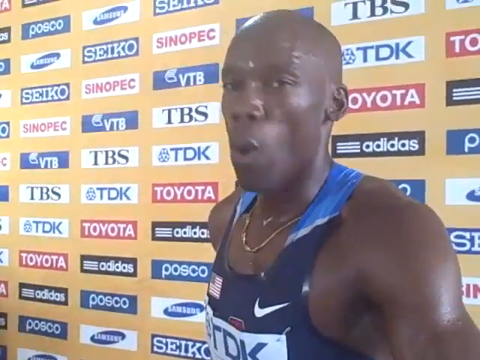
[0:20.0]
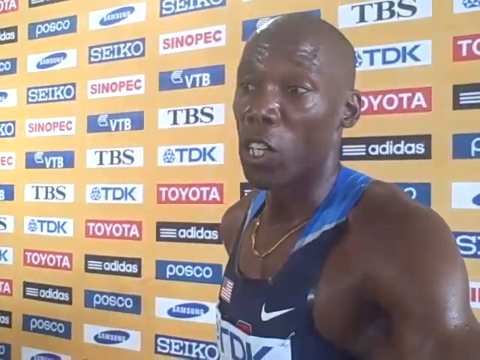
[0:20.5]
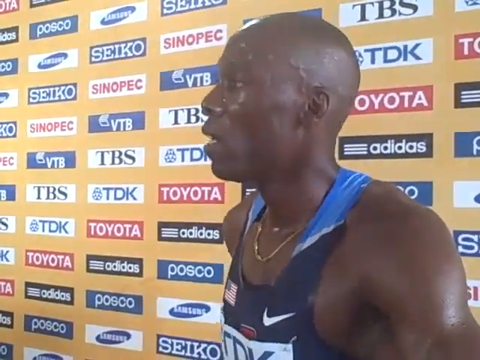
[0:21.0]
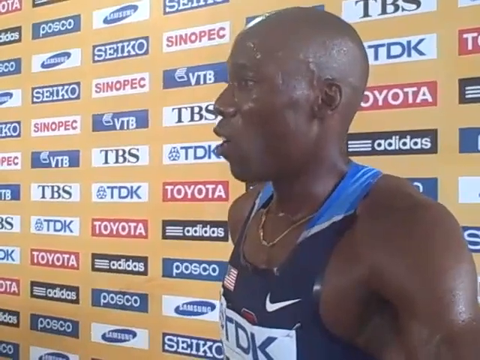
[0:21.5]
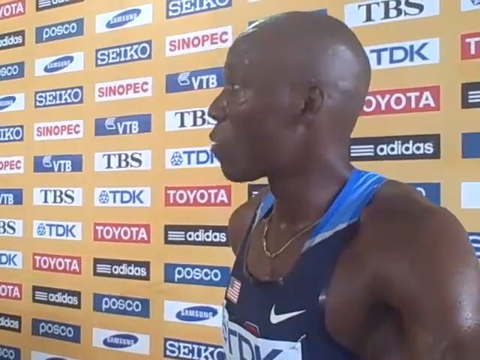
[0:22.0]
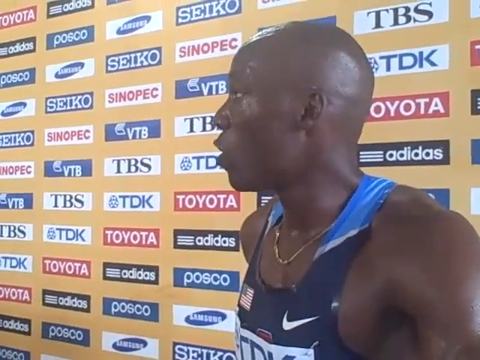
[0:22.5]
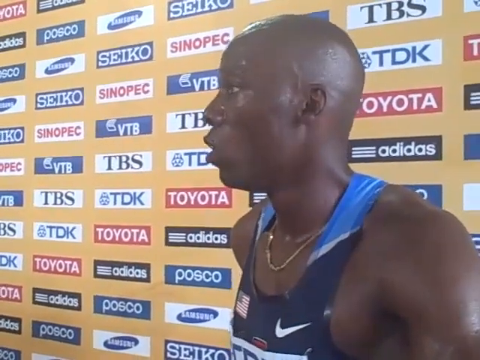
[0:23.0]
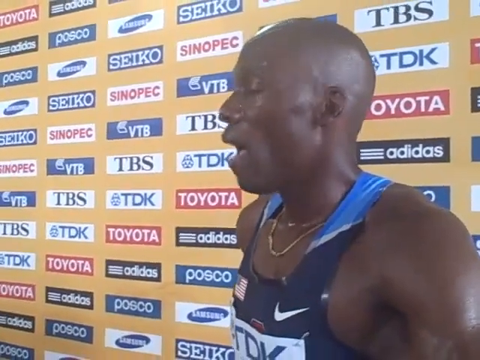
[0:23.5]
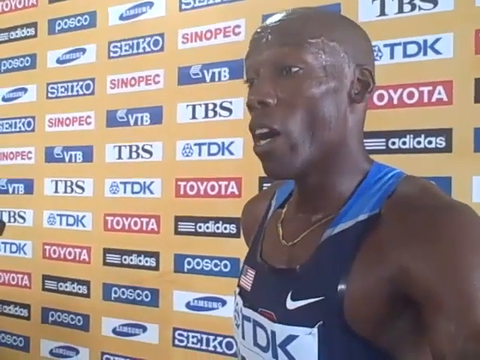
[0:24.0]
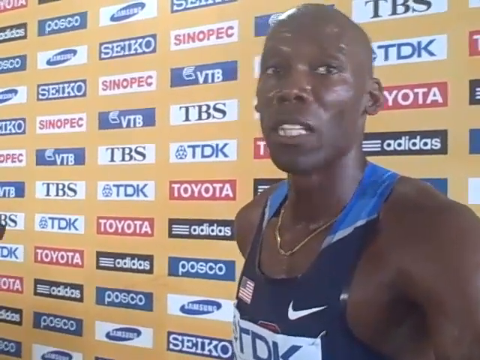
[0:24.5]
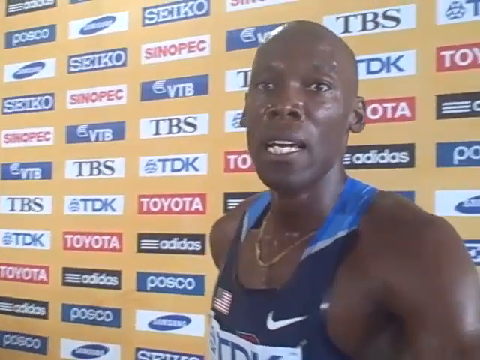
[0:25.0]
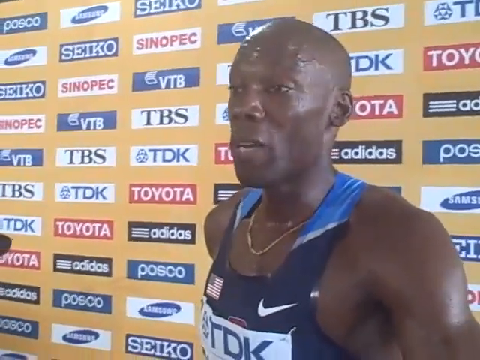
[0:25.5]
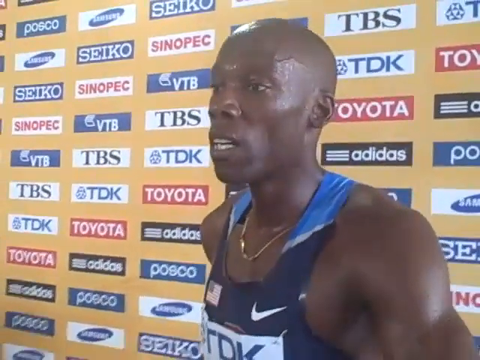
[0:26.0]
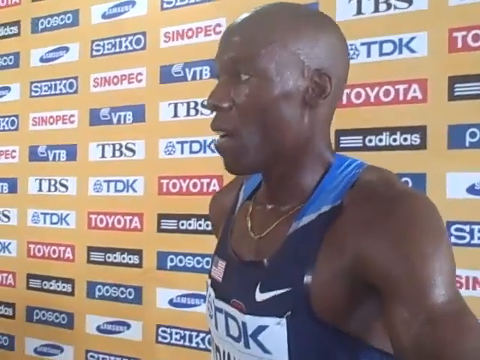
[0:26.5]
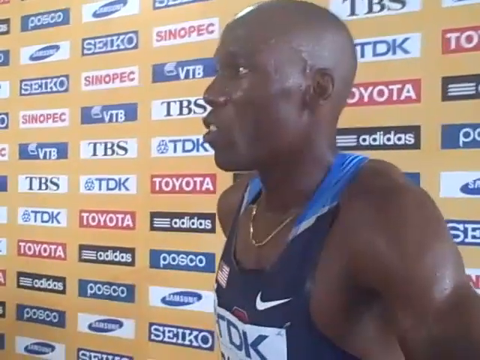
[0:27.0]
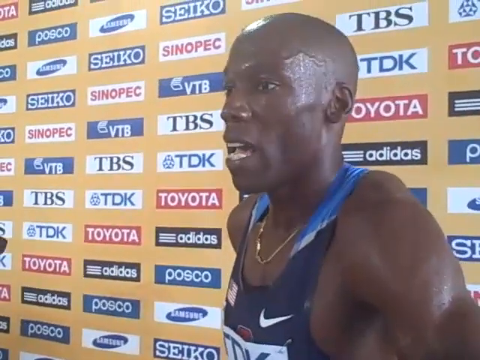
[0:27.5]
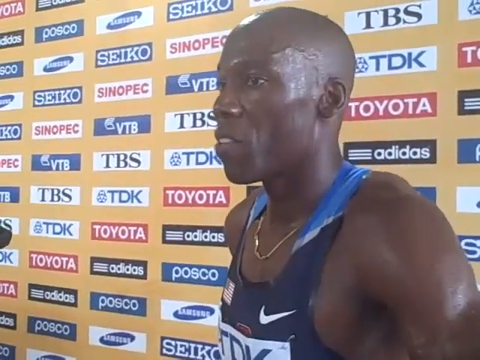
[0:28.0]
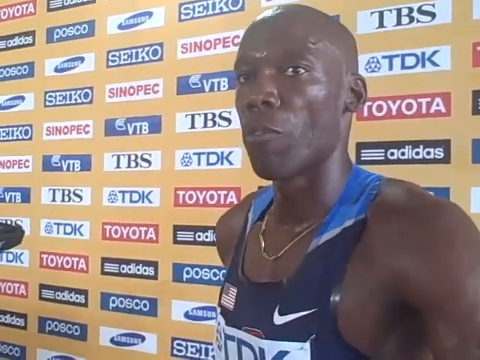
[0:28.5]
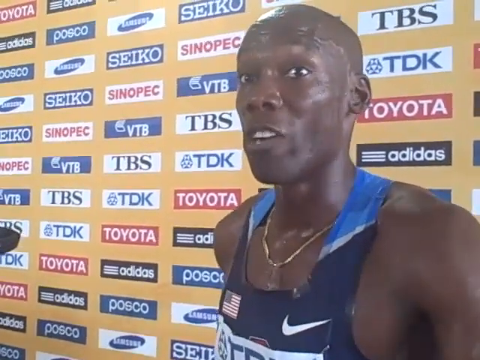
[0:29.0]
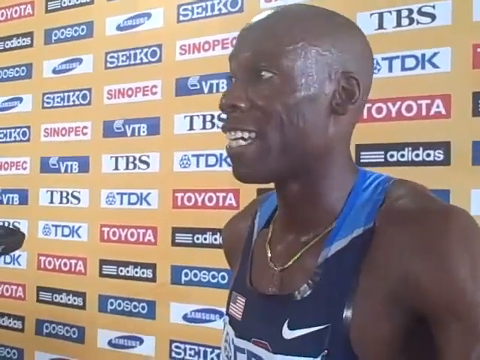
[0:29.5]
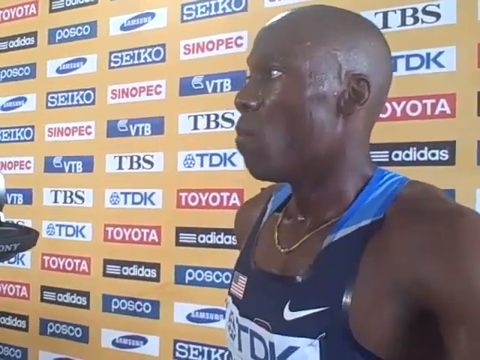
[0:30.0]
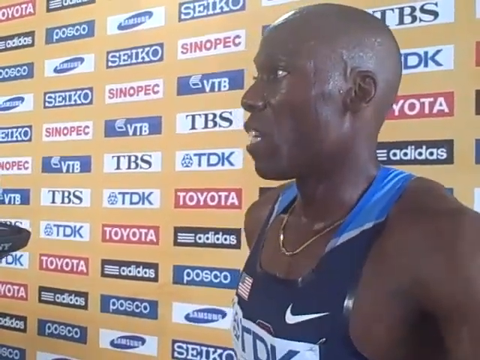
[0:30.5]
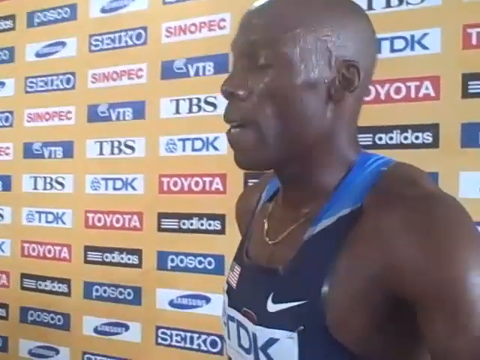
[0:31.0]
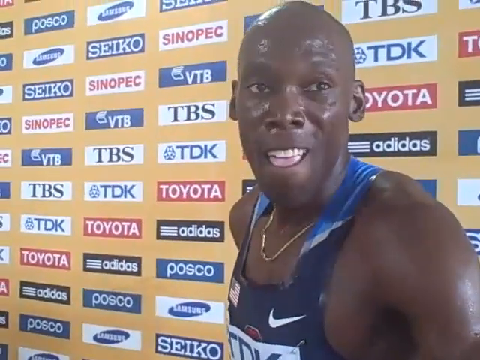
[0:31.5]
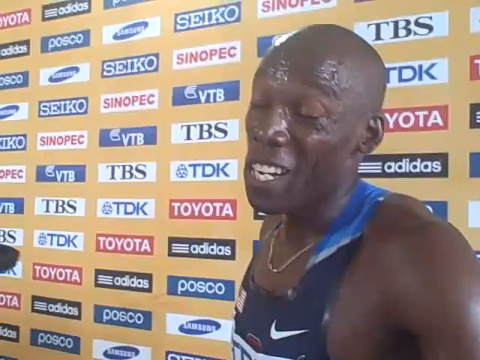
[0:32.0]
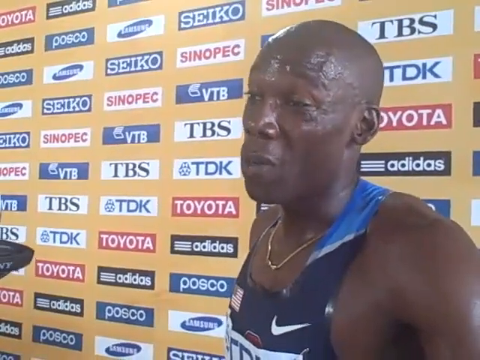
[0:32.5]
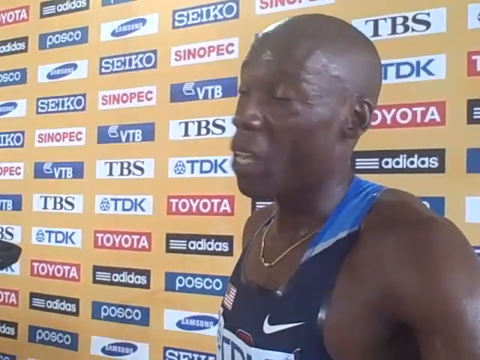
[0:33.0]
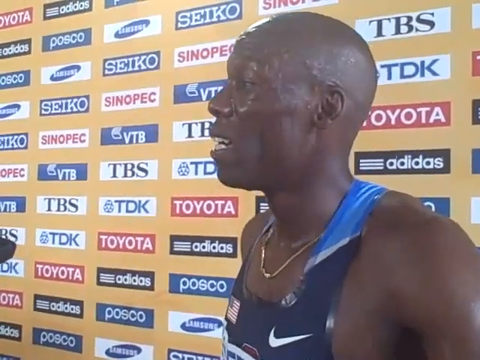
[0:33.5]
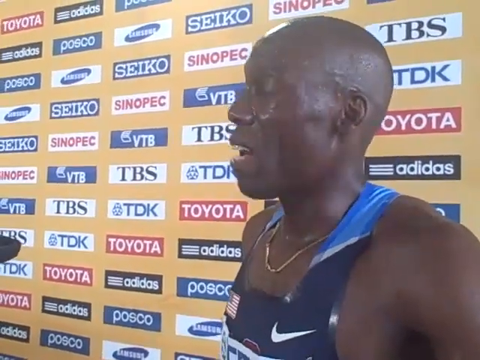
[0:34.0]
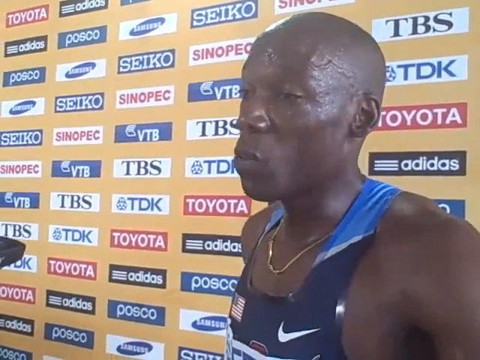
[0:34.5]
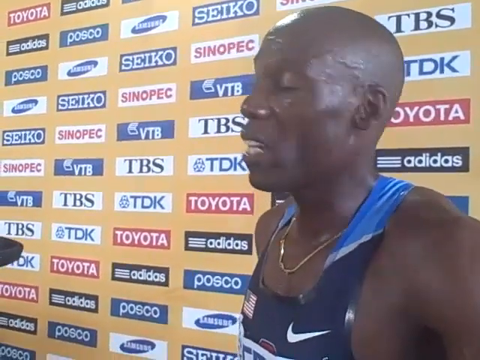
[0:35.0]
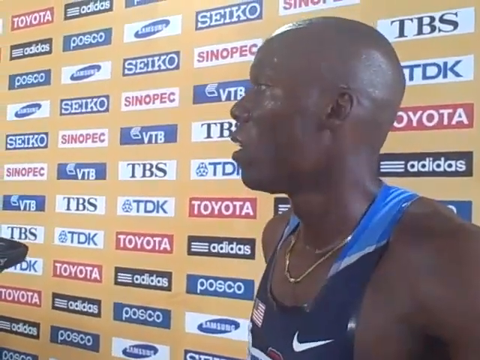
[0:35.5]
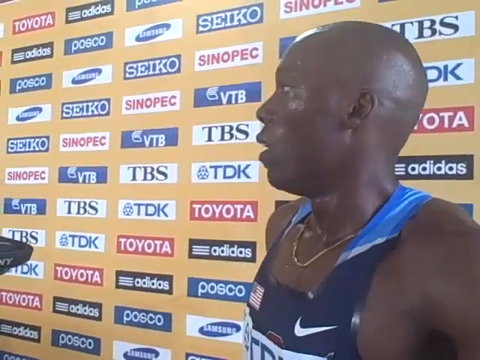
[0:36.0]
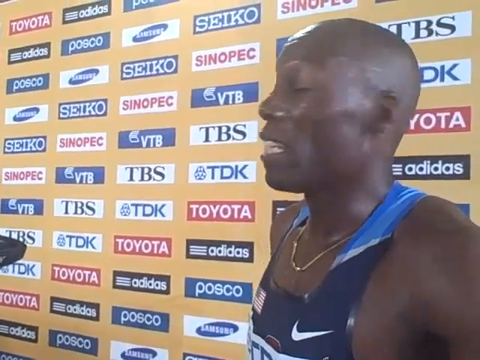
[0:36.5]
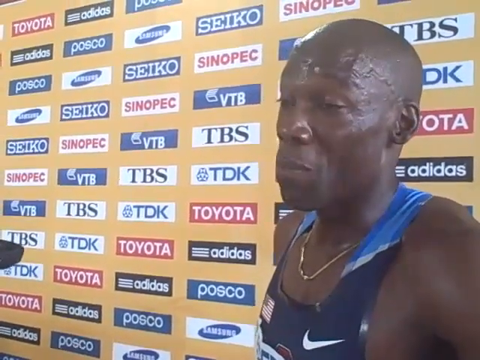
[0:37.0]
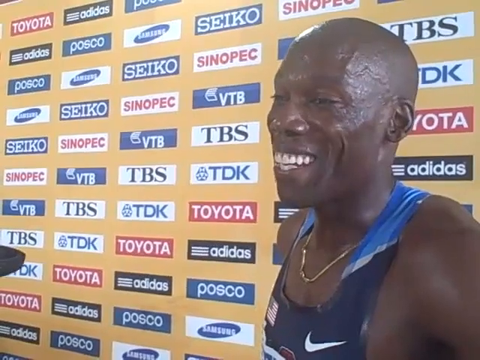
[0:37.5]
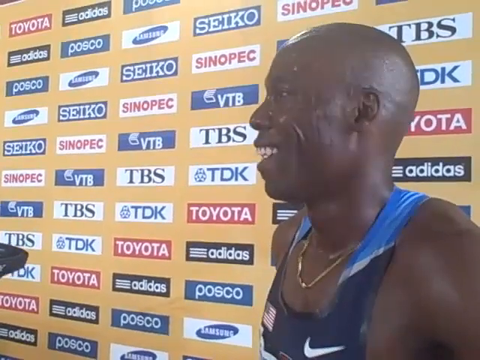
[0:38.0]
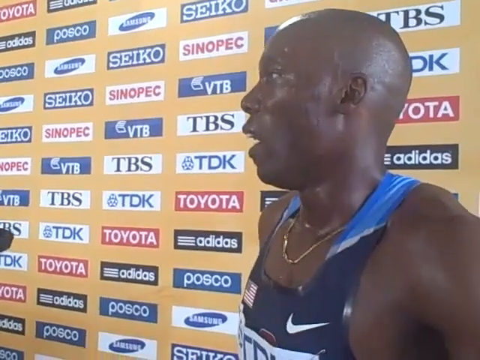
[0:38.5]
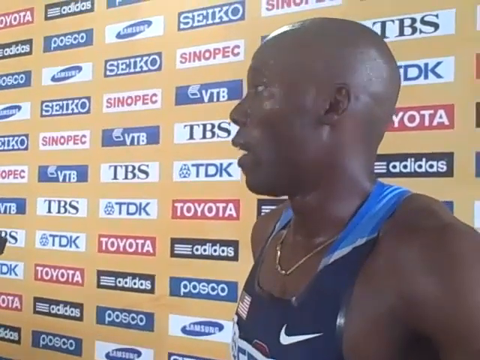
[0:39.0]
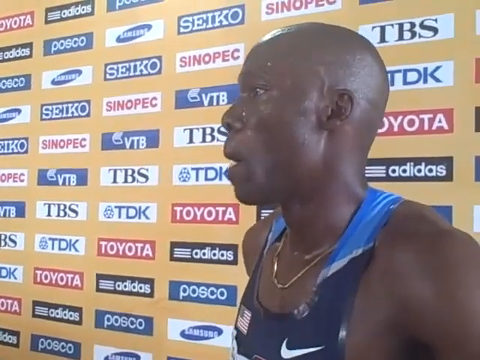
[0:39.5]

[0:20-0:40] The man continues talking, breathing really hard as he speaks and looking around. He looks towards the camera first, then quickly turns his head around, his mouth moving very quickly as he breathes heavily. A bib is sort of visible on his jersey; it is hard to see what it says, but it kind of looks like another sponsor. He stands in front of the logos, which are not really a billboard but more like a wallpaper or background. The background is a light orange color, and the sponsors are contained inside a rectangle with an even amount of yellow background between each of them, forming a really organized grid. The main colors of the sponsor logos are white, blue, red and black.